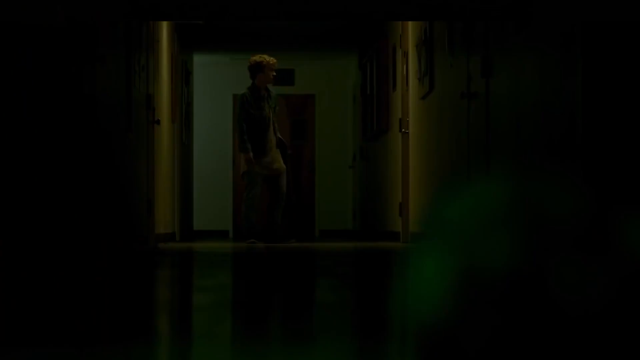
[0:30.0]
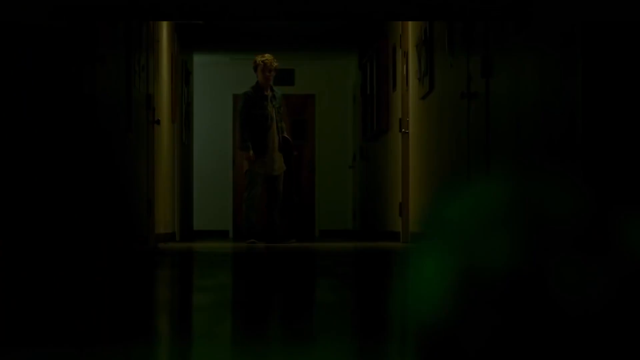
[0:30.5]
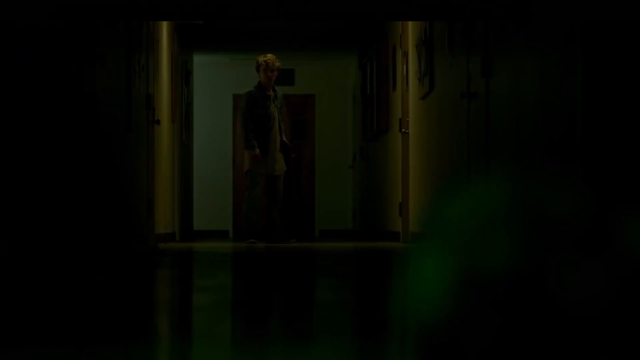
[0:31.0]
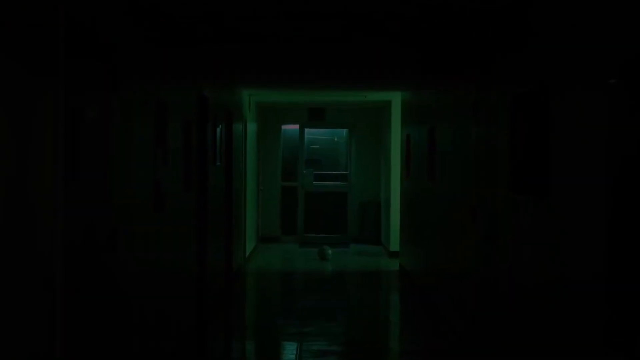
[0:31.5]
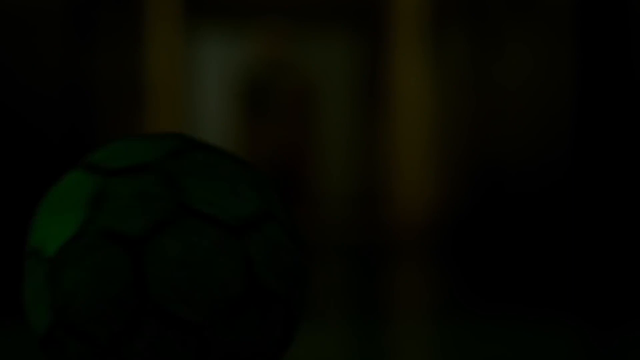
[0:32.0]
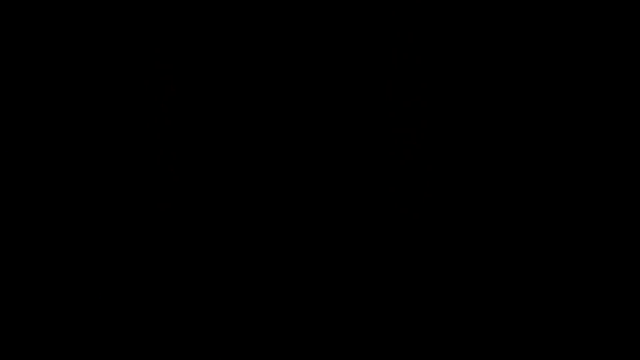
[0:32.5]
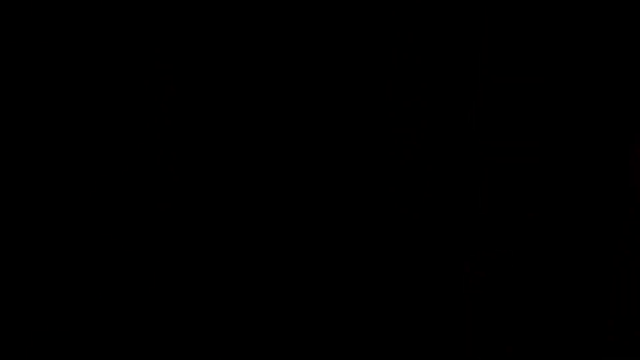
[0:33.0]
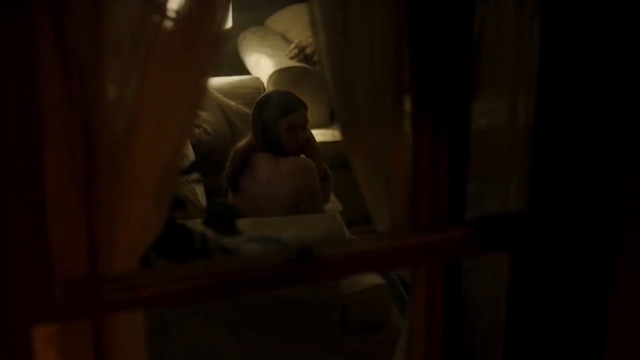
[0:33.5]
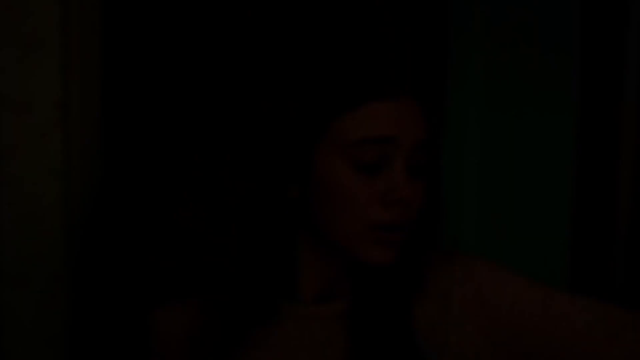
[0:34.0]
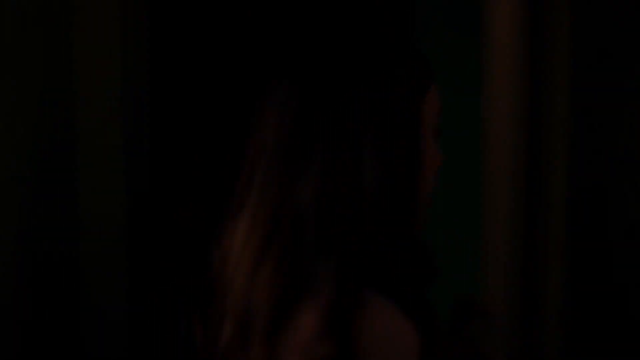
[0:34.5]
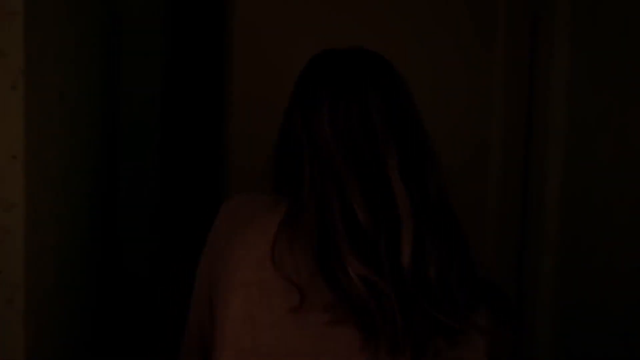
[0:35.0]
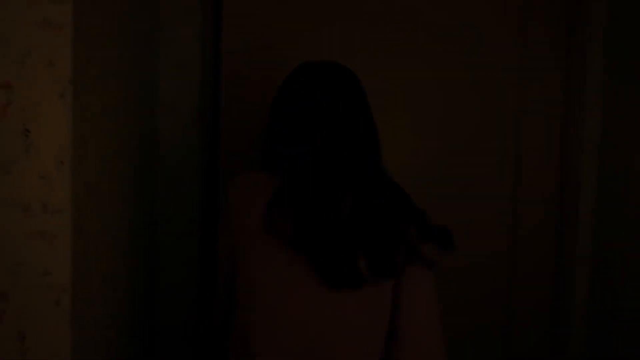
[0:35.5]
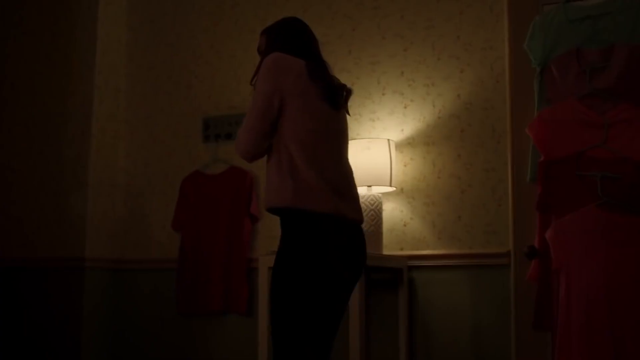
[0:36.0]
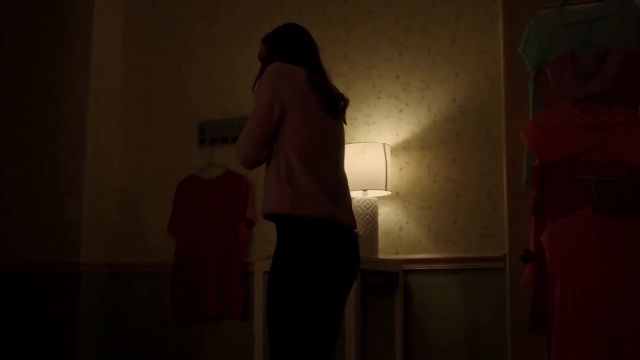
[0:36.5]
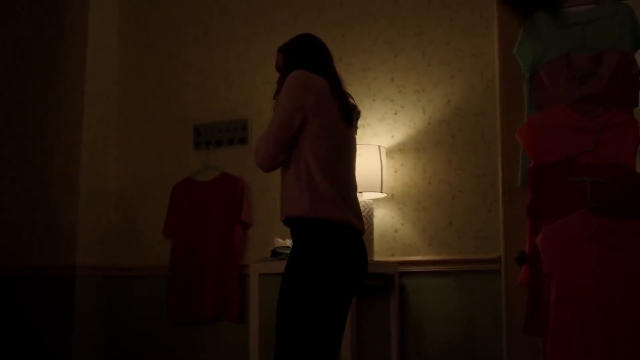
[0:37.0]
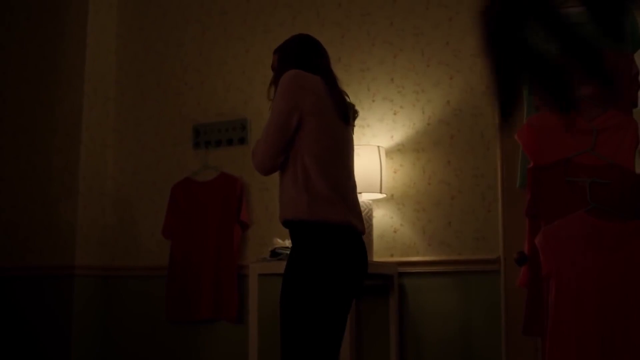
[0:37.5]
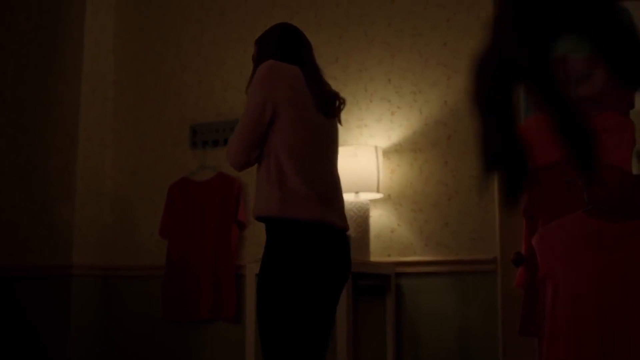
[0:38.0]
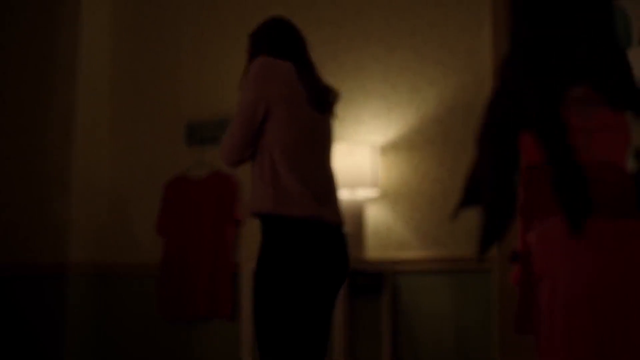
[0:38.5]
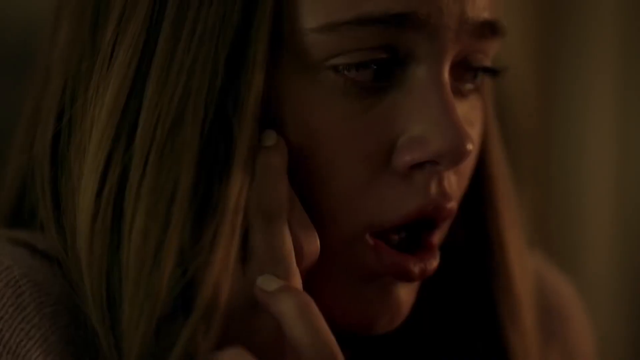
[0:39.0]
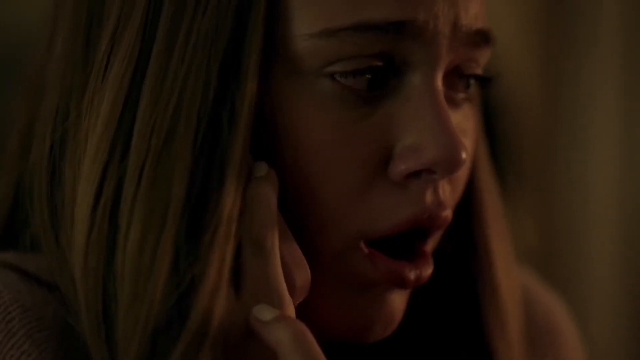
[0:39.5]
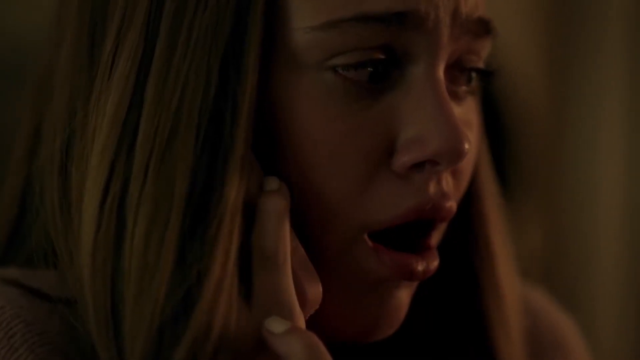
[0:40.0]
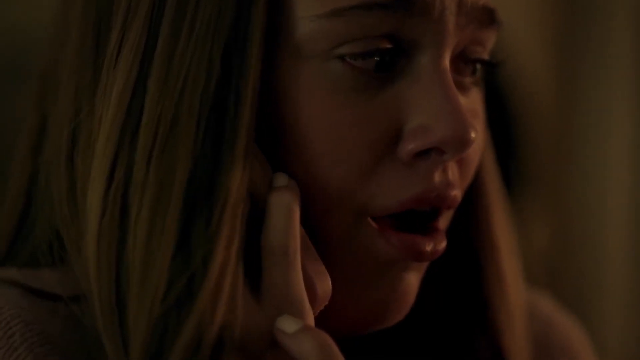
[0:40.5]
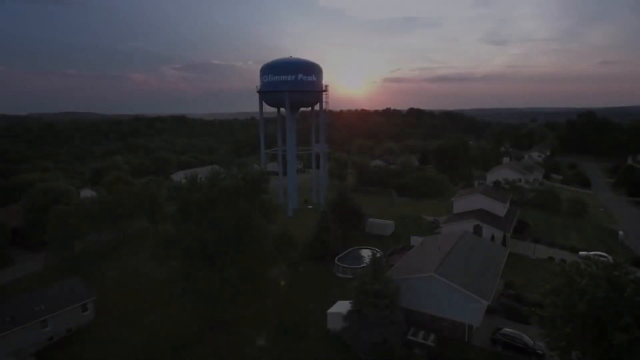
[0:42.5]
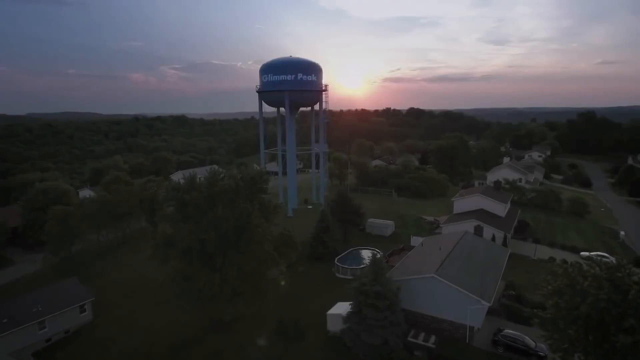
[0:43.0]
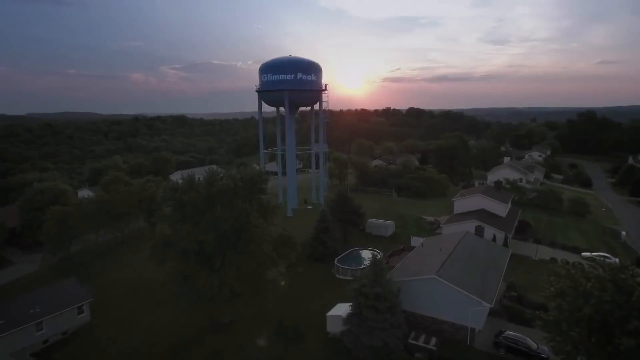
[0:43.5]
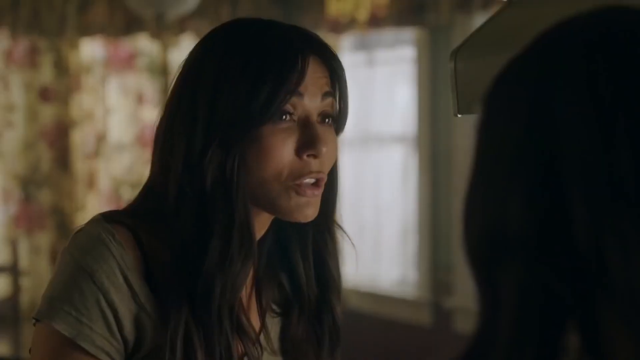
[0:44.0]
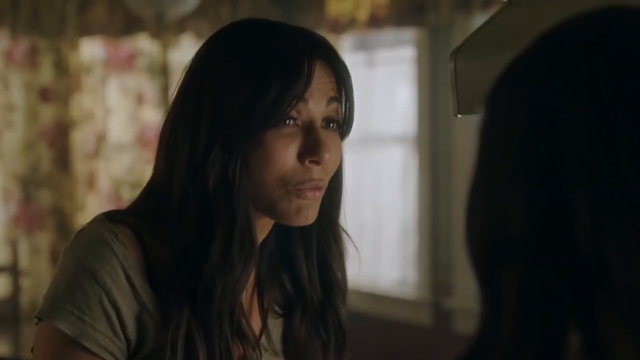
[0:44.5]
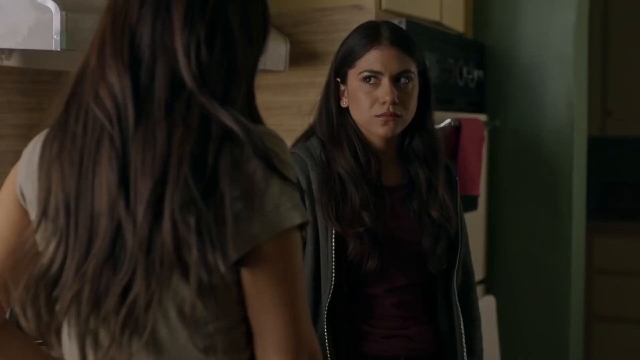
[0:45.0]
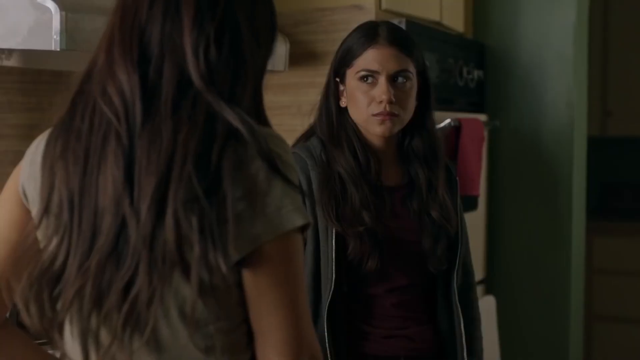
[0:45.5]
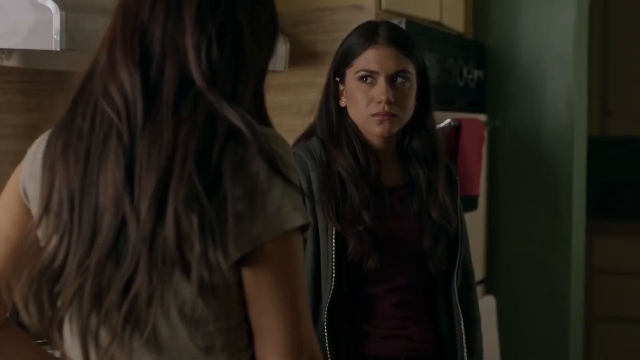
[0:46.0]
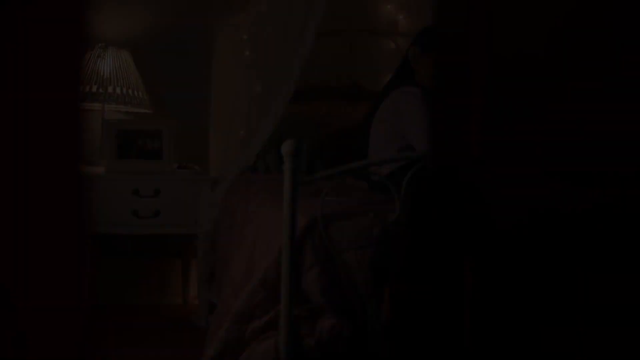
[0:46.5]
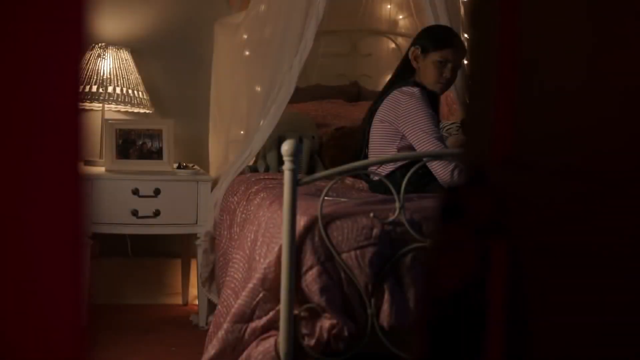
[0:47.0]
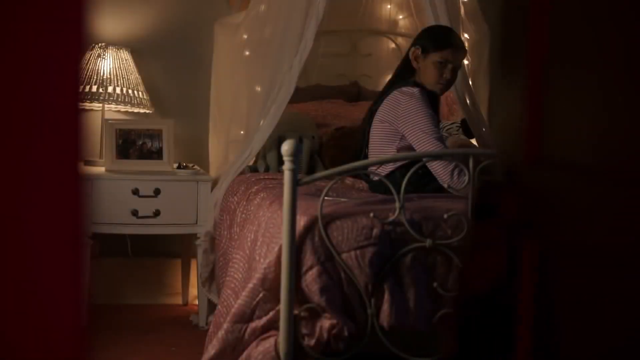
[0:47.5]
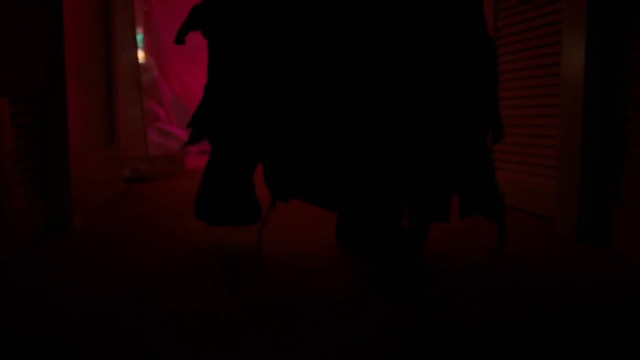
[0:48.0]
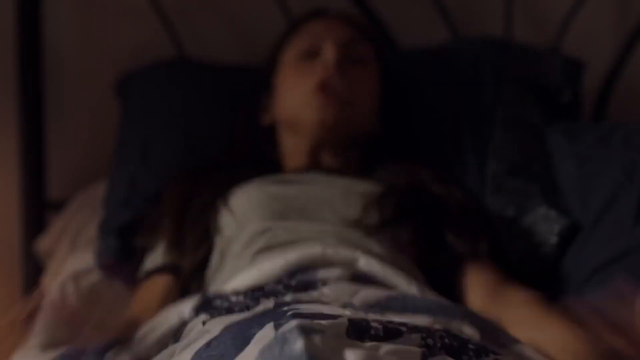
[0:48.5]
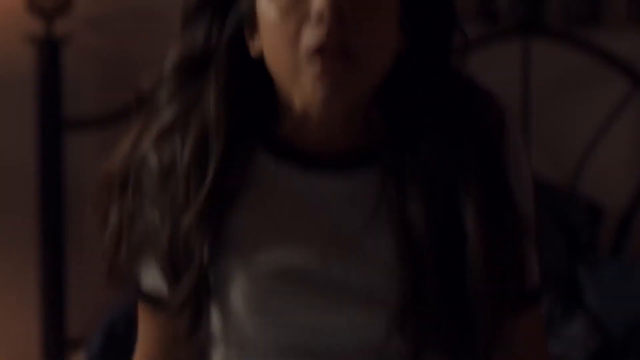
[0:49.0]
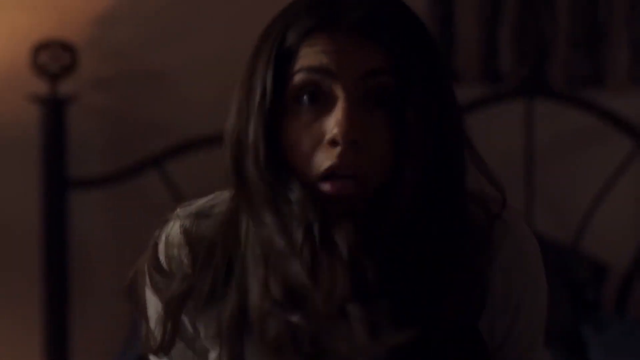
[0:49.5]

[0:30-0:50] A boy in a jacket, a long T-shirt and light blue jeans stands in an empty hallway lined by multiple doors on both sides, looking down the hallway. A soccer ball quickly rolls across the floor. The view changes to a woman with blonde hair sitting on a couch, seen from outside a window; a shadowy figure briefly walks by in front of the window as the woman turns her head around to look outside. A woman in a pink sweater closes a door and stands in a room in front of a lamp. A hand appears from the top left of the screen behind her. She holds a cell phone to her right ear, her mouth open in fear, and she is trembling. The scene changes to an early morning view of a neighborhood, with a large blue water tower in the center of the screen bearing white text that says "Glimmer Peak" and the sun appearing in the clouds at the top of the scene. Inside, two women have a conversation: one with long brown hair and a gray T-shirt speaks to a woman in a dark sweater and a maroon shirt. A girl sits on her bed, which has pink blankets and a cover with sparkling lights, looking toward her open bedroom door. A shadowy figure then walks toward a doorway.